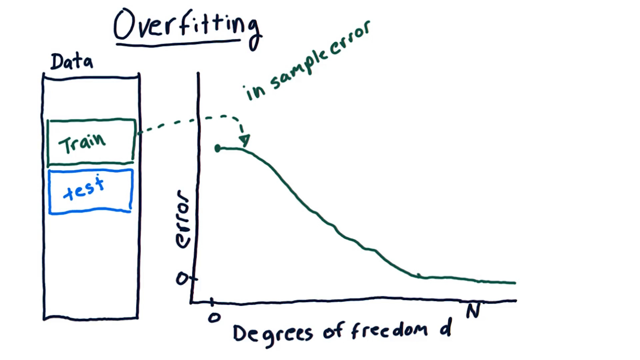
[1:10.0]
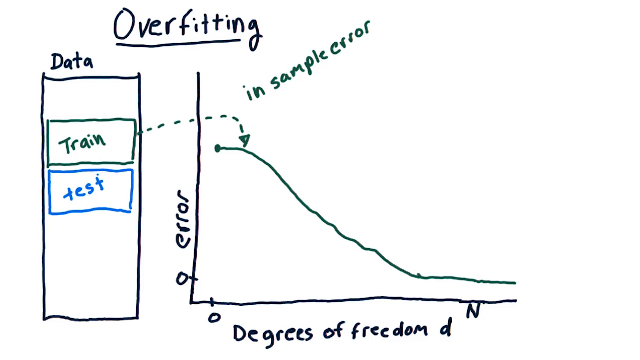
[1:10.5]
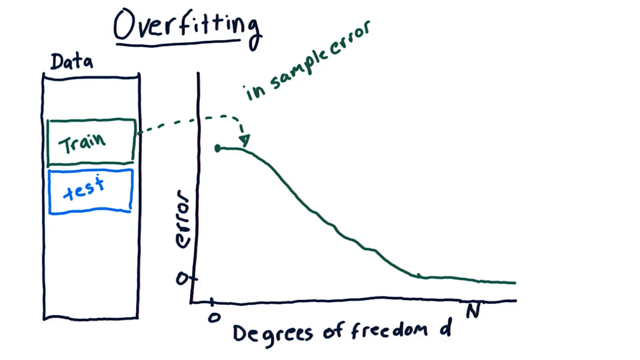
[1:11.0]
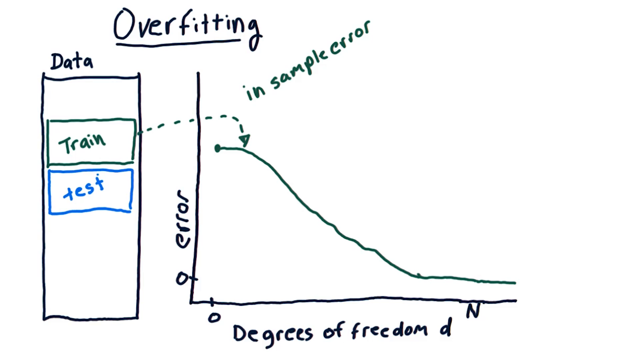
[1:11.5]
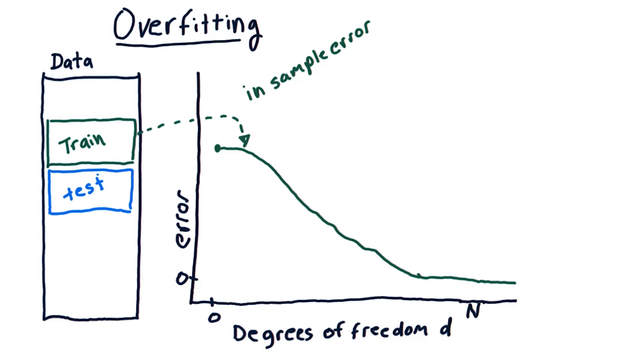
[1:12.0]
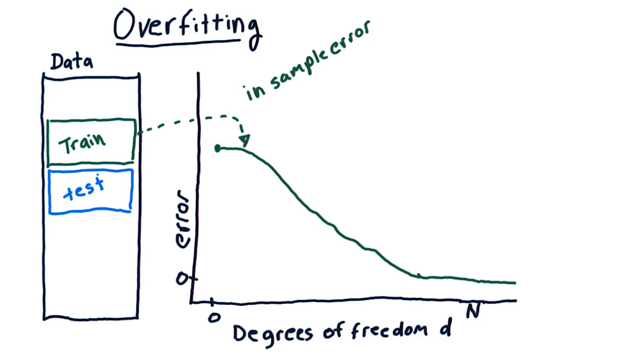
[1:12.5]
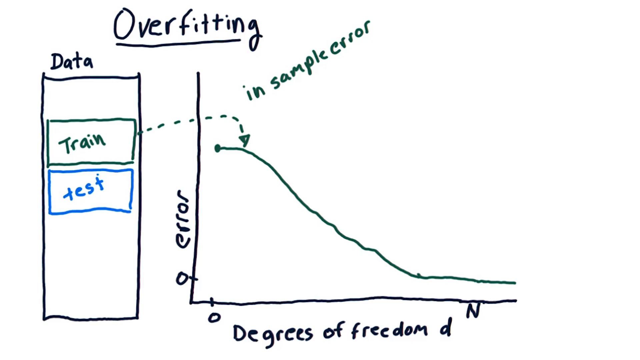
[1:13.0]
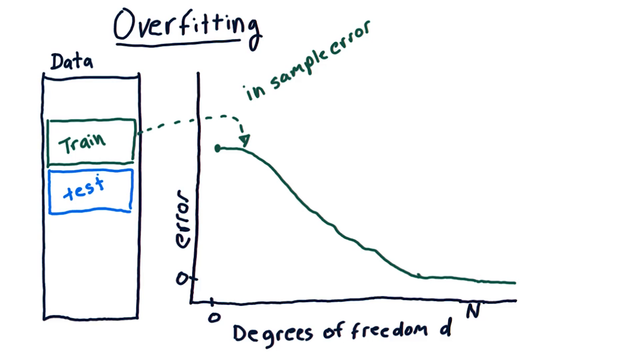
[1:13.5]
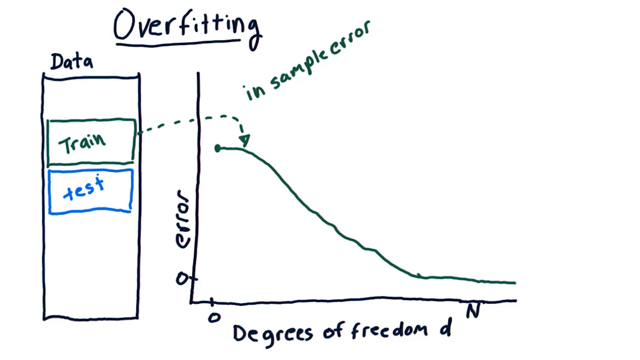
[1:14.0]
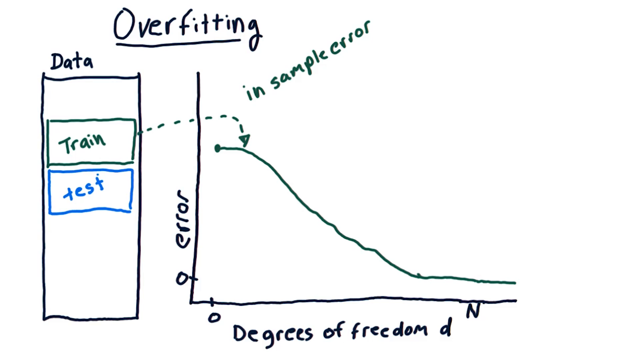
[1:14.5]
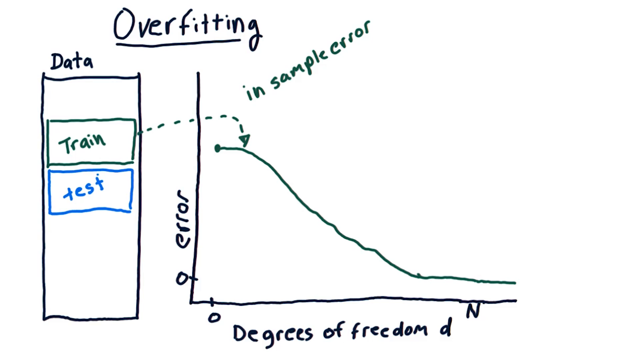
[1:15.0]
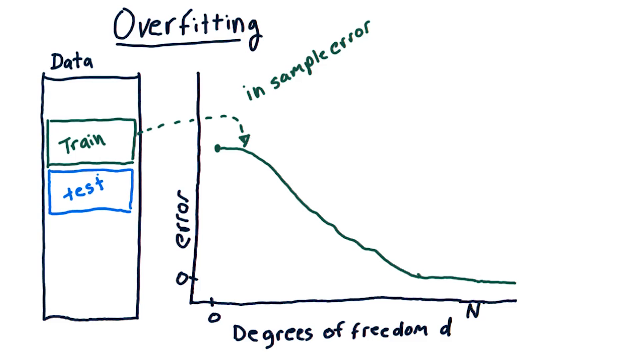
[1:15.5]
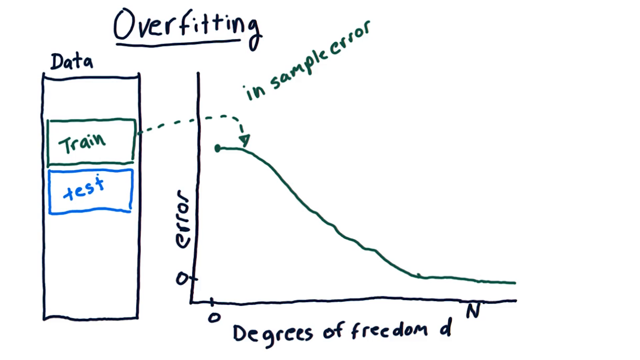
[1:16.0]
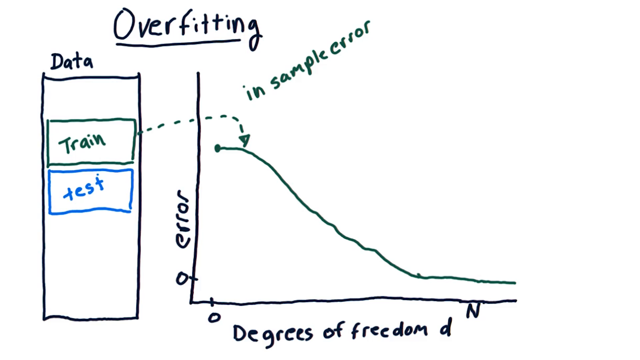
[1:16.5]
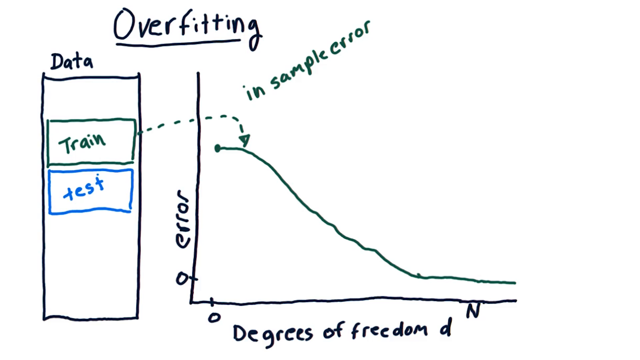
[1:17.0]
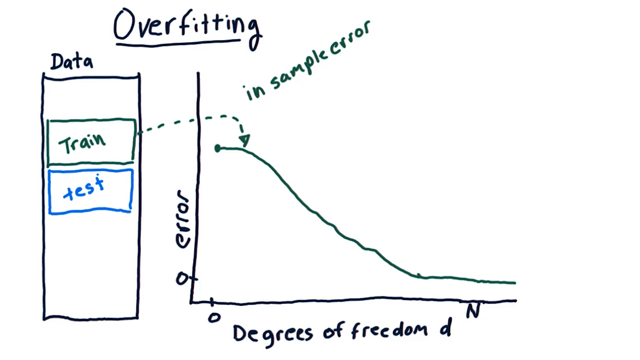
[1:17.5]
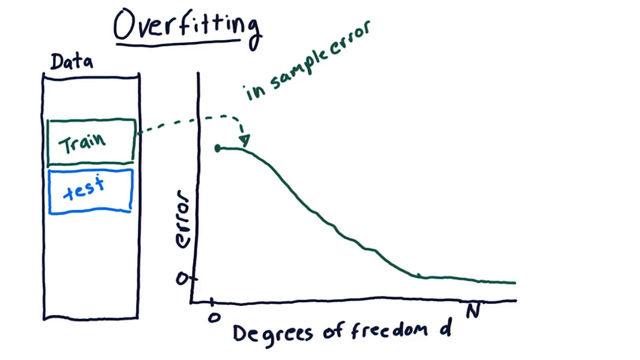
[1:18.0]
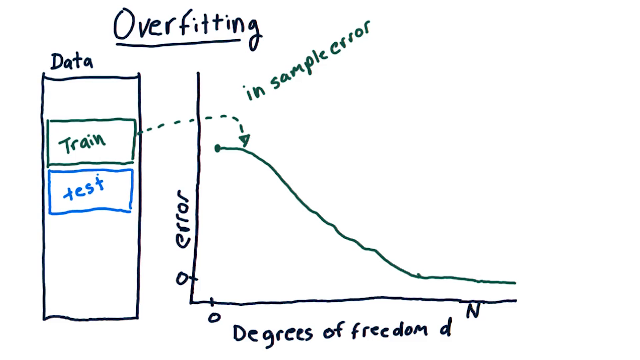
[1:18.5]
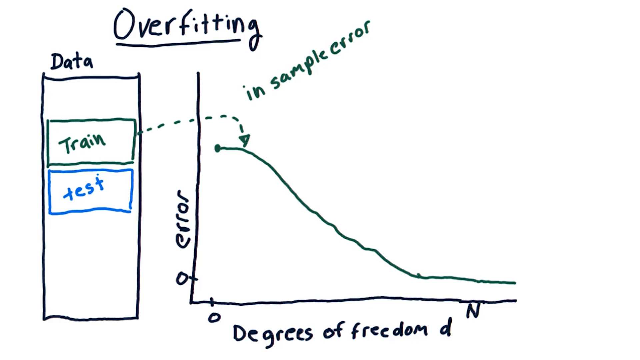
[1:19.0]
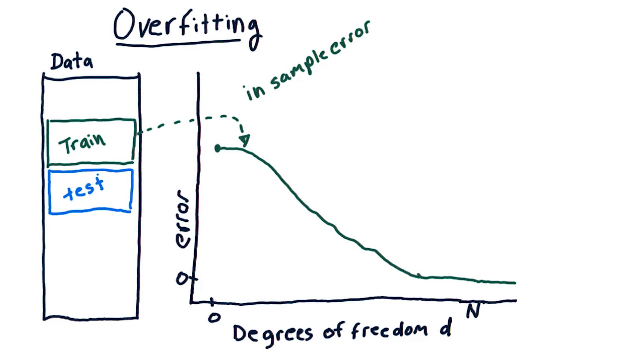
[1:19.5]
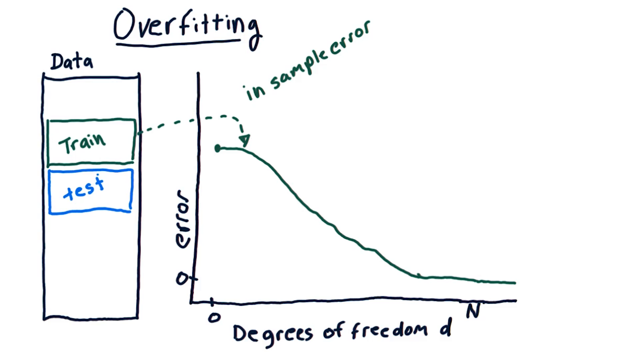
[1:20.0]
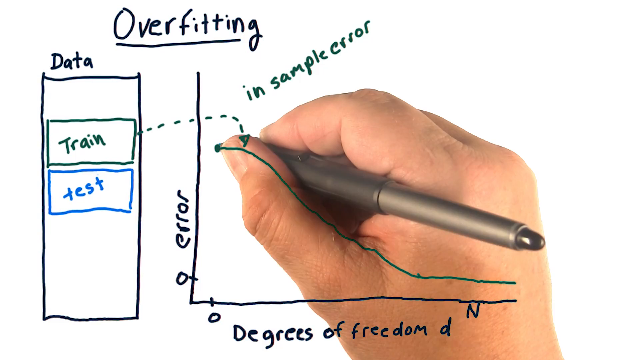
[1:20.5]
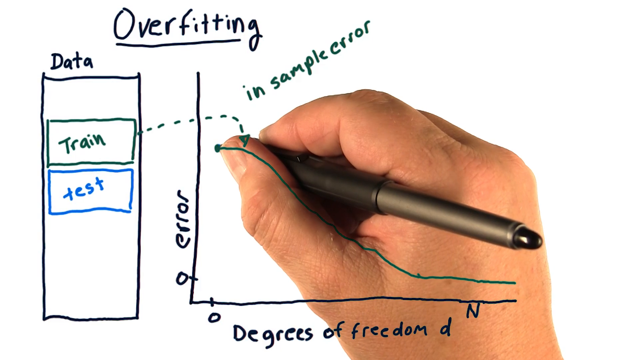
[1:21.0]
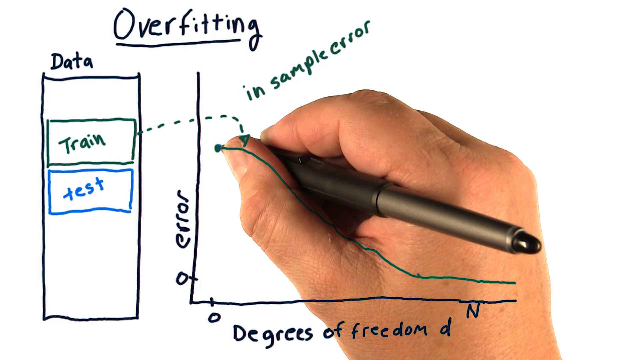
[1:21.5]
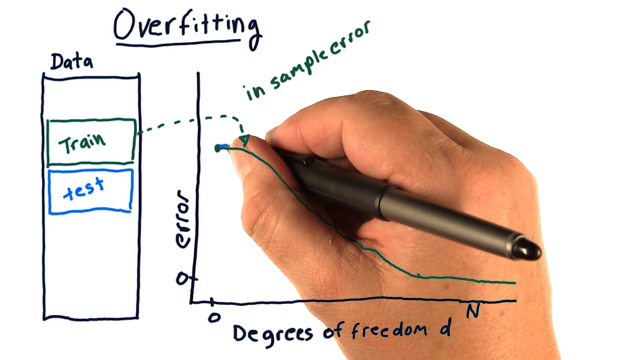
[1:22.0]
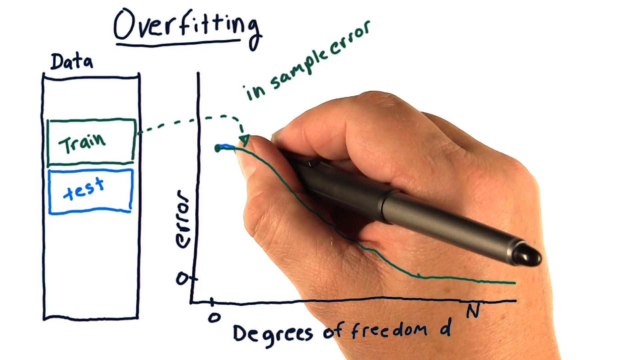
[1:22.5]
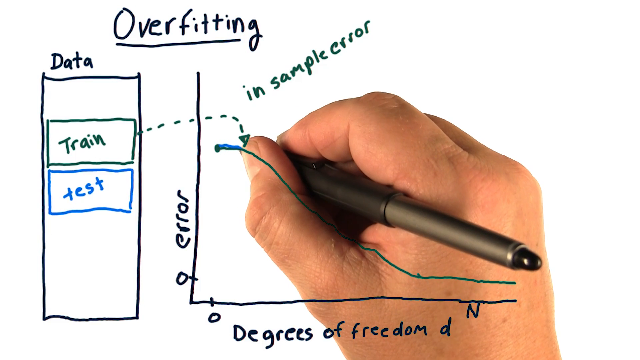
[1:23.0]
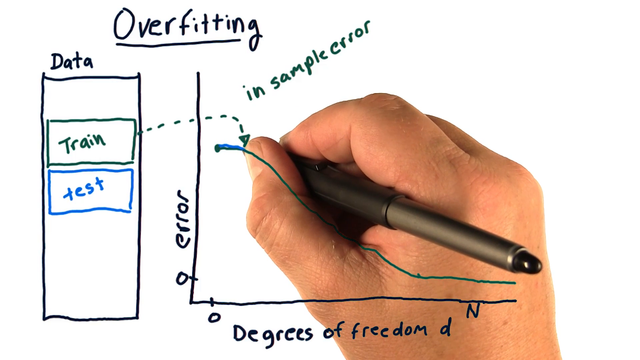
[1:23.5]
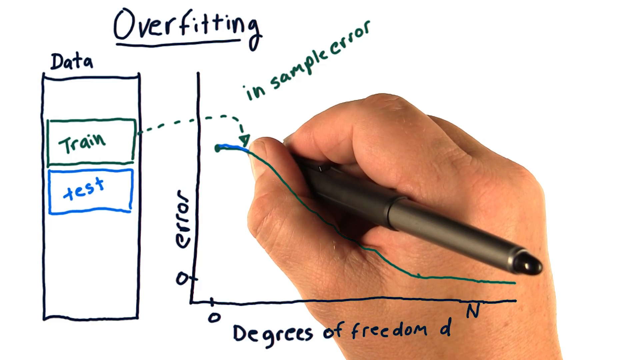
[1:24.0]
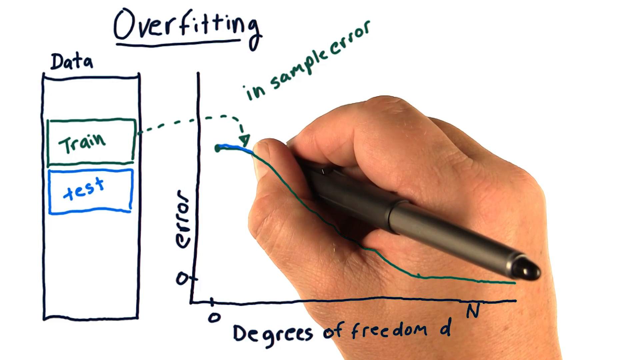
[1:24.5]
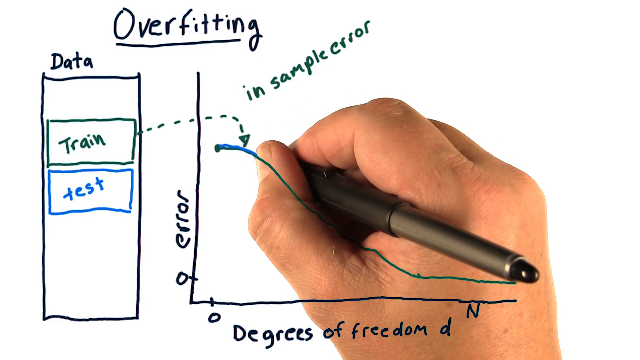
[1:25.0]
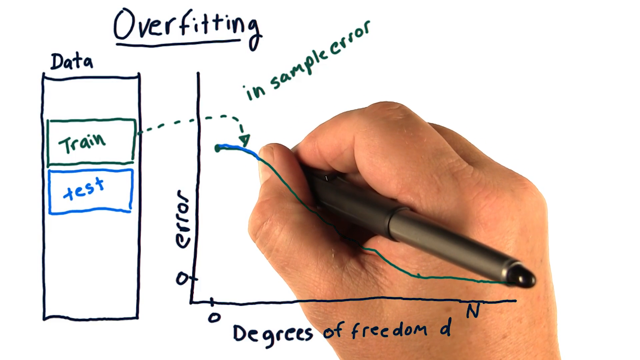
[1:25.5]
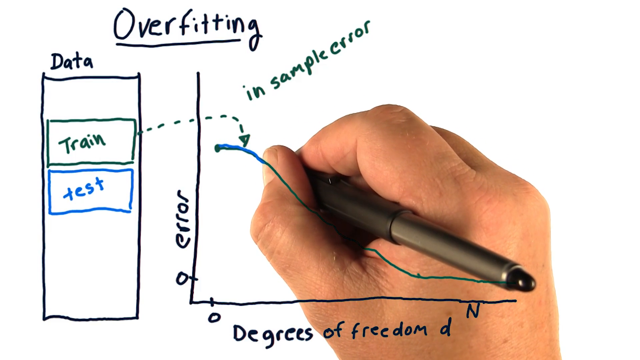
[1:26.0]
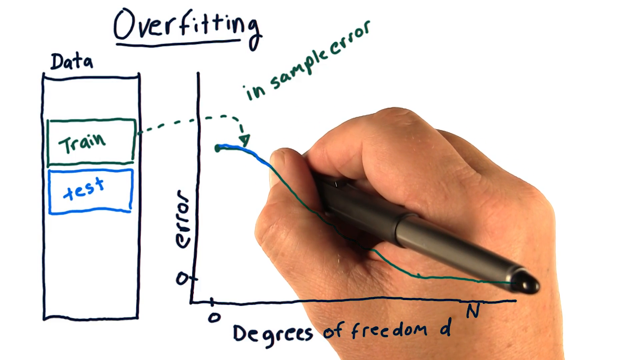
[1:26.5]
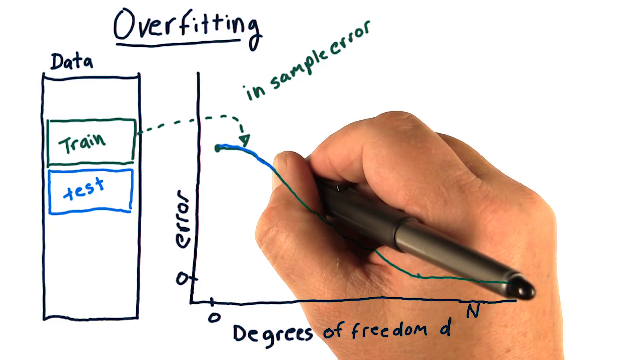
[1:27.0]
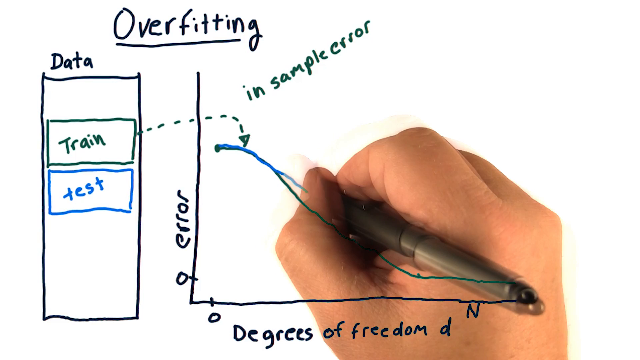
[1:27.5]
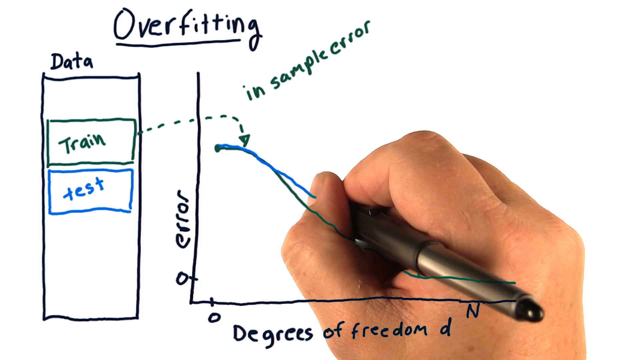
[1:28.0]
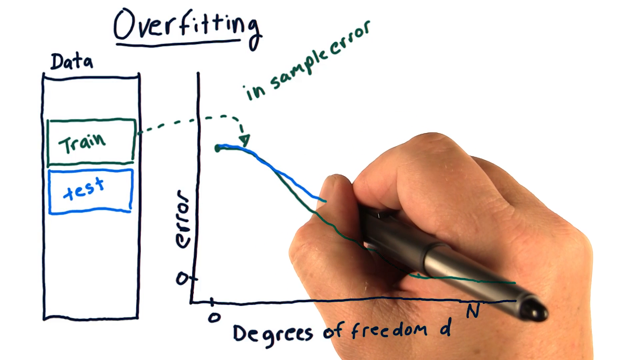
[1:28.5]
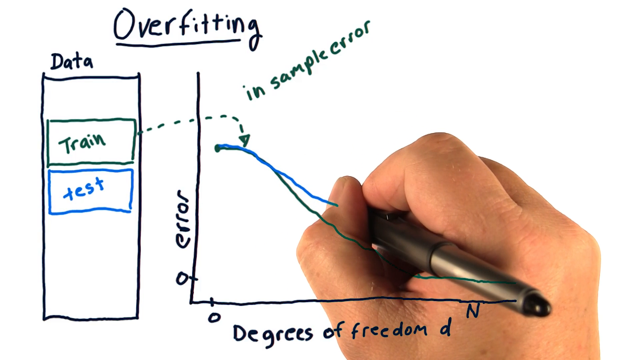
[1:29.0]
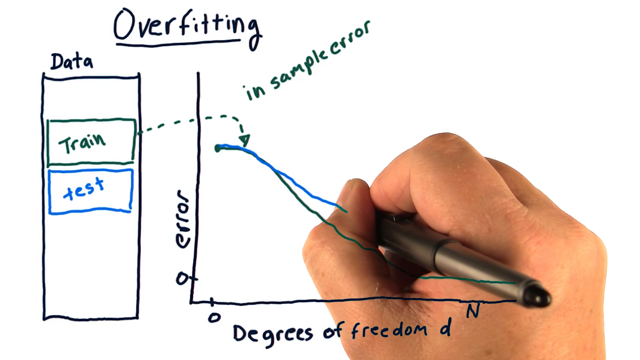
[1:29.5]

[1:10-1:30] A hand-drawn graph appears, with what look like black, green and blue lines. At the top is a black handwritten title reading "overfitting". On the left is a rectangle with "data" above it; inside it is a rectangle drawn with a green line with "train" written in green, and below it another rectangle drawn in blue reading "test". On the right is the graph: the y-axis is labeled "error" with a 0 at the bottom, and the x-axis has 0 on the left and n on the right and is labeled "degree of freedom, D". A green line starts at zero on the x-axis at the top of the y-axis, runs horizontally, slopes downward, and becomes horizontal at zero on the y-axis as it reaches the right side. A dotted arrow goes out from the left side of the green "train" rectangle and points down to the green line, and above the line is a green handwritten note reading "in sample error". A right hand holding a pen then appears in the middle of the frame and starts drawing a blue line from the same starting point, tracing the green line at first on the left side. On the downward slope, the blue line appears less steep, and it seems to be leveling out at a higher point than the green line.